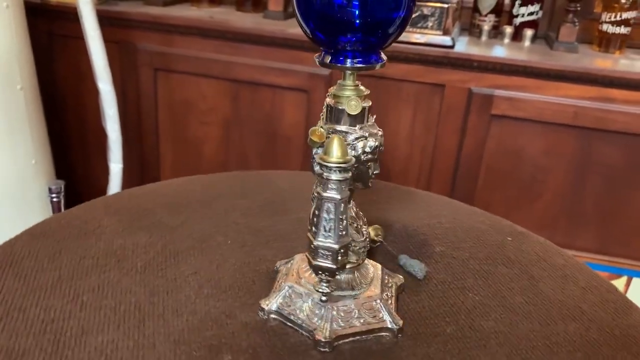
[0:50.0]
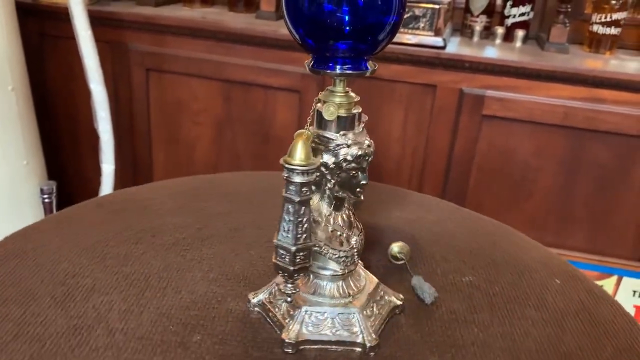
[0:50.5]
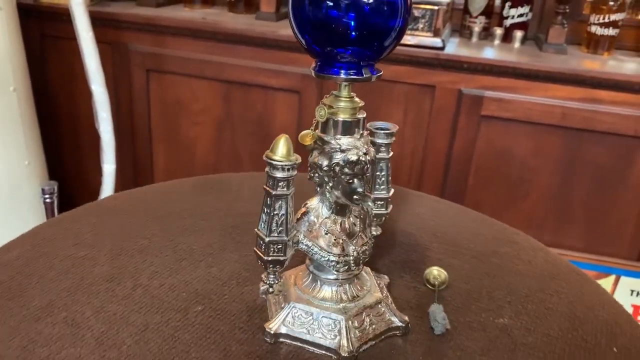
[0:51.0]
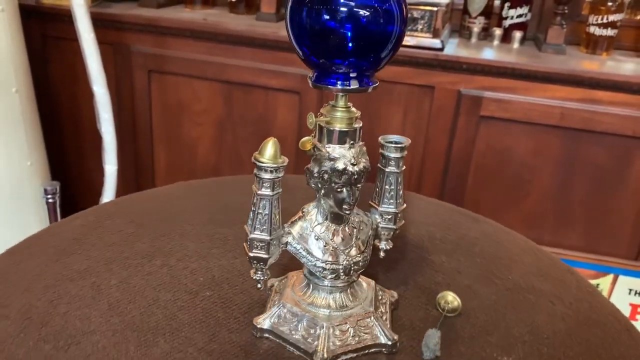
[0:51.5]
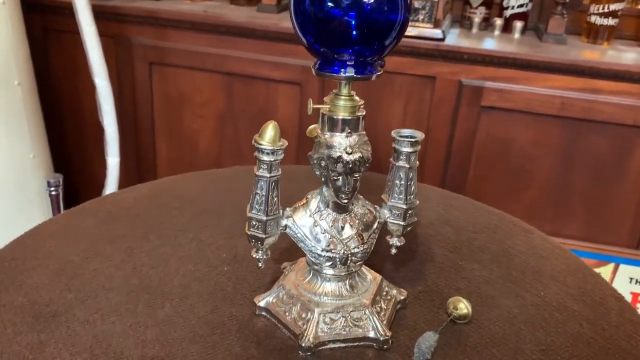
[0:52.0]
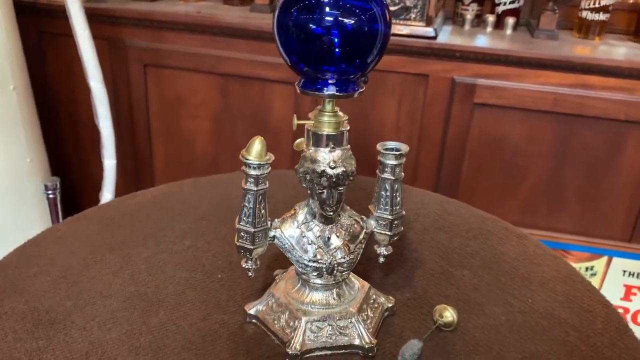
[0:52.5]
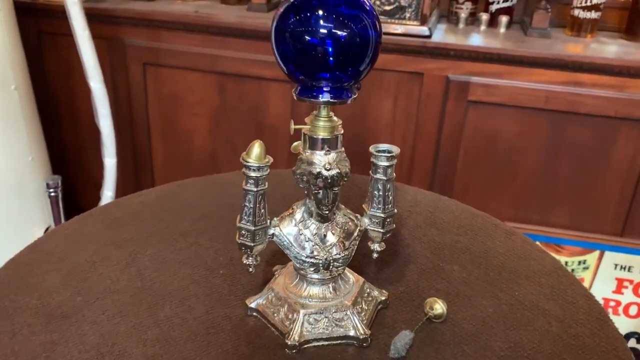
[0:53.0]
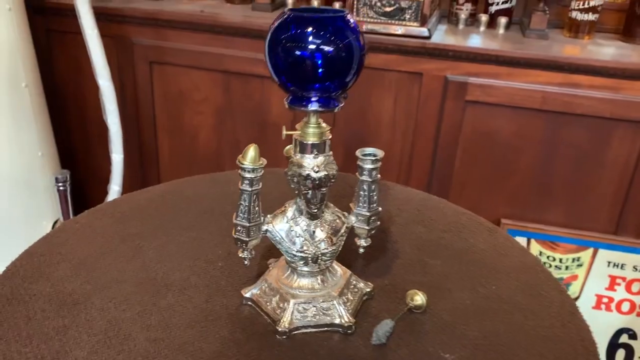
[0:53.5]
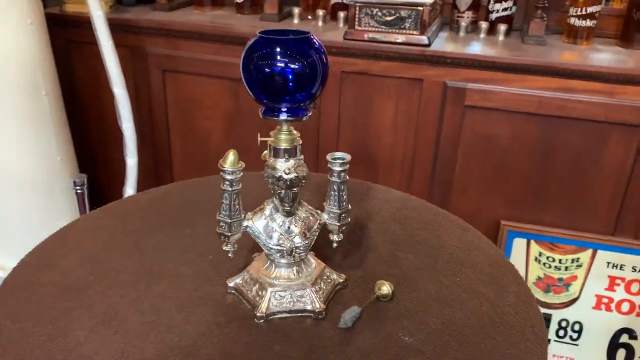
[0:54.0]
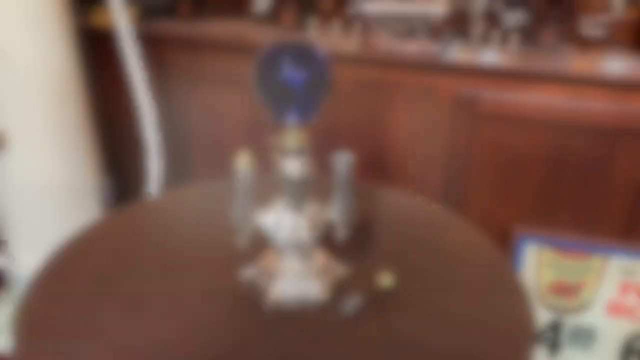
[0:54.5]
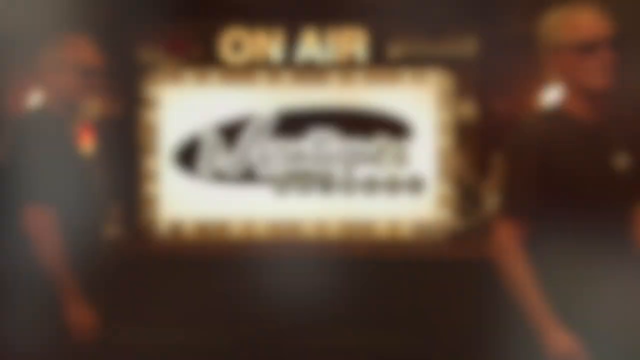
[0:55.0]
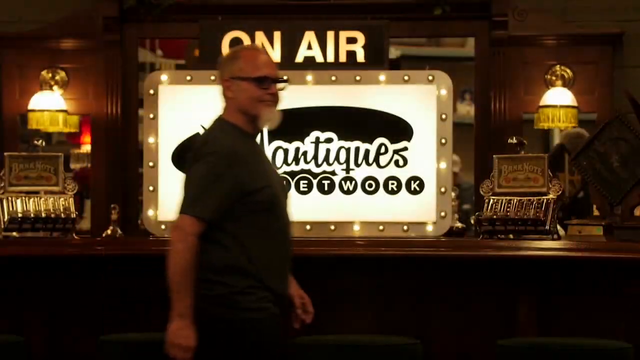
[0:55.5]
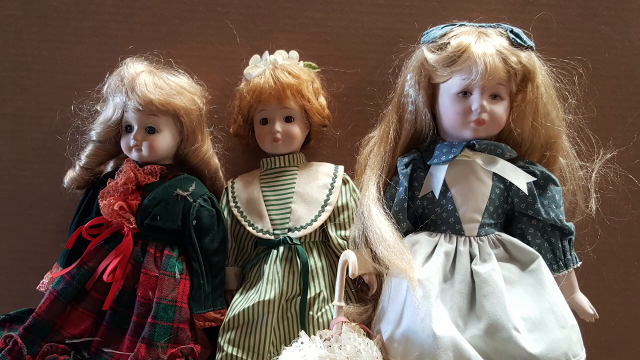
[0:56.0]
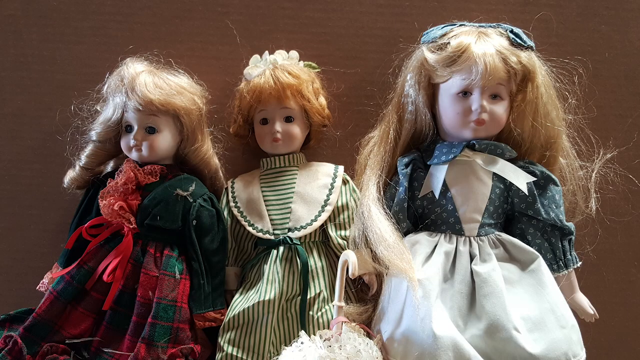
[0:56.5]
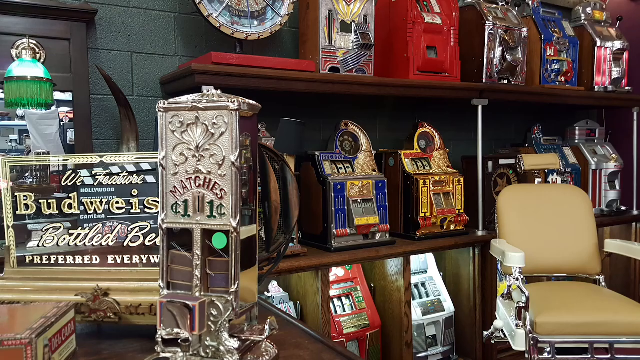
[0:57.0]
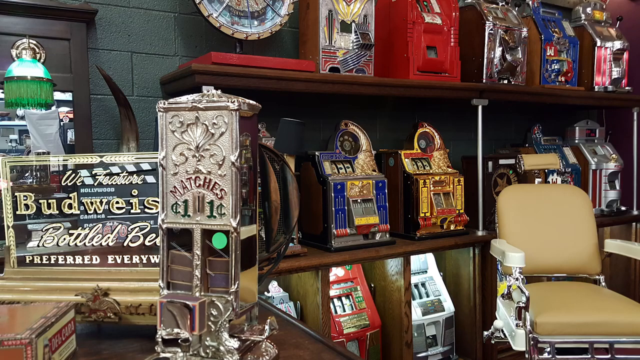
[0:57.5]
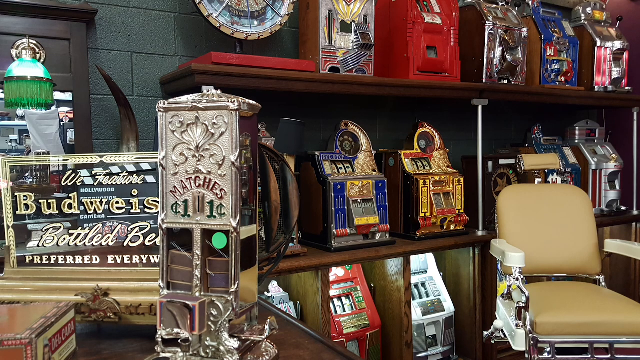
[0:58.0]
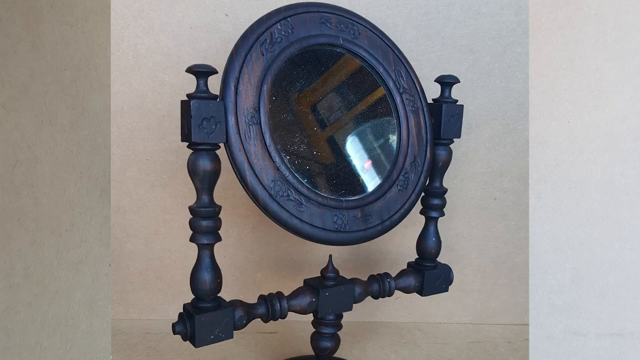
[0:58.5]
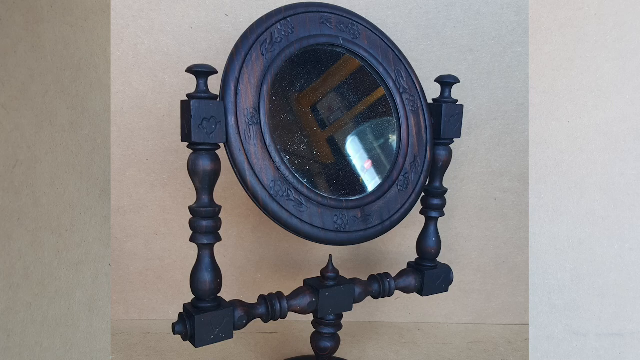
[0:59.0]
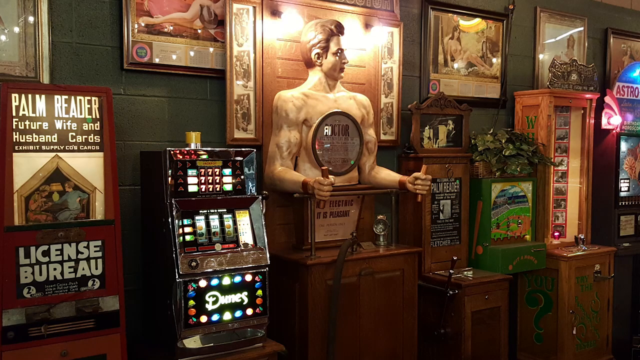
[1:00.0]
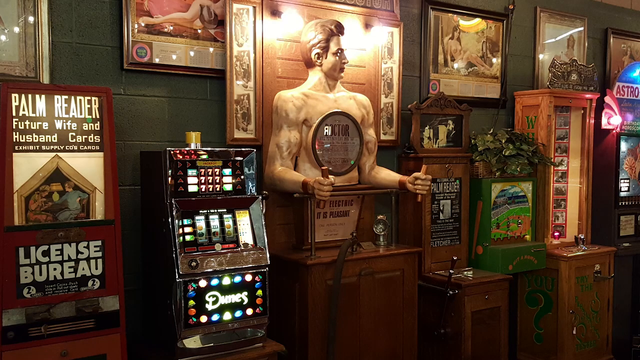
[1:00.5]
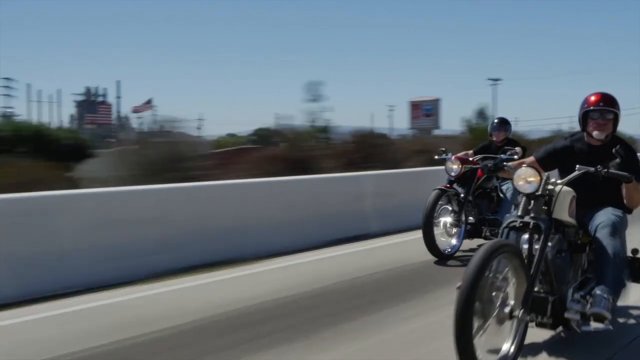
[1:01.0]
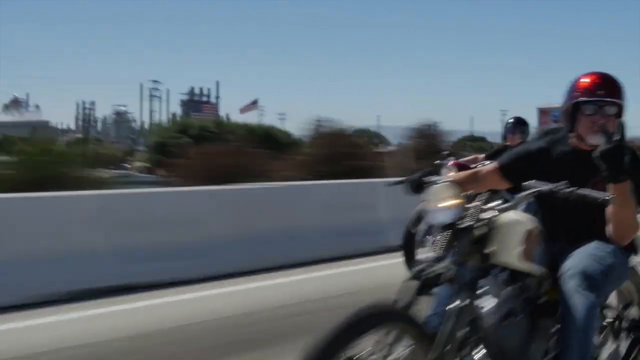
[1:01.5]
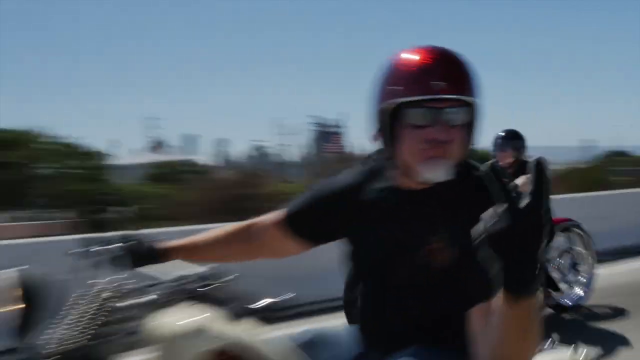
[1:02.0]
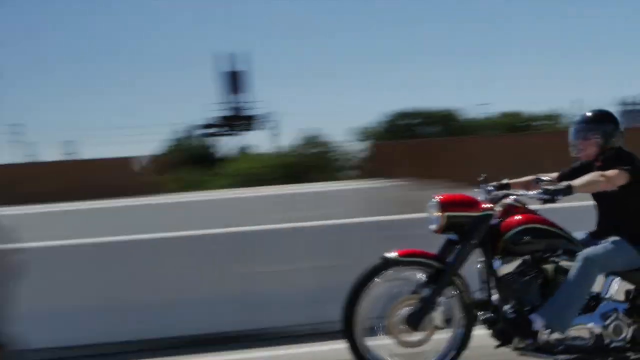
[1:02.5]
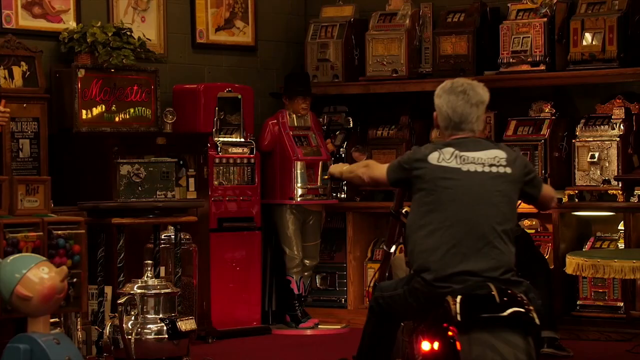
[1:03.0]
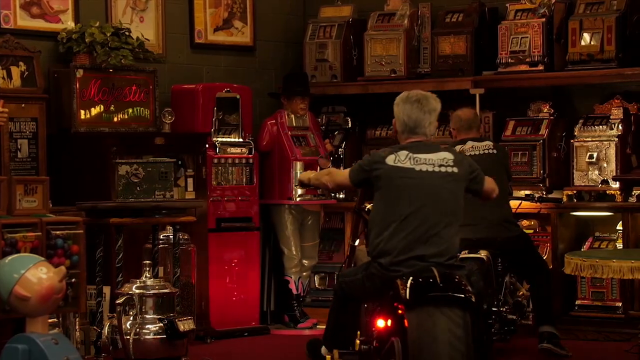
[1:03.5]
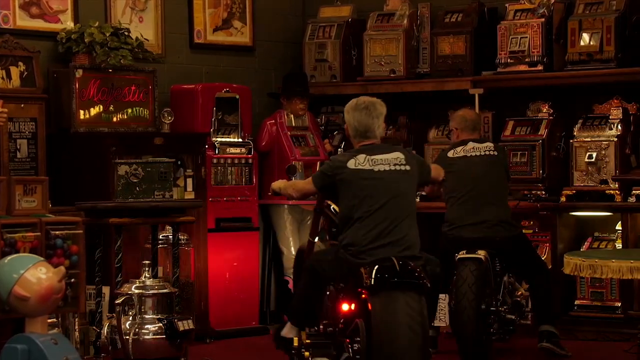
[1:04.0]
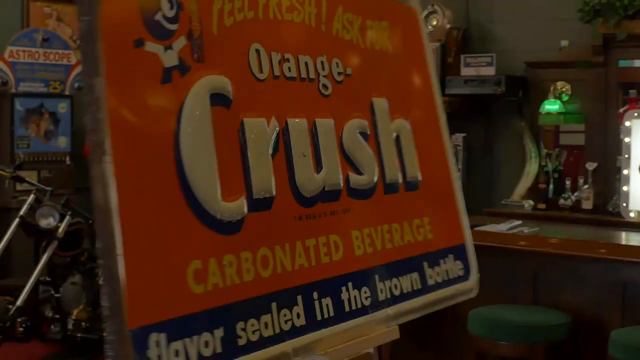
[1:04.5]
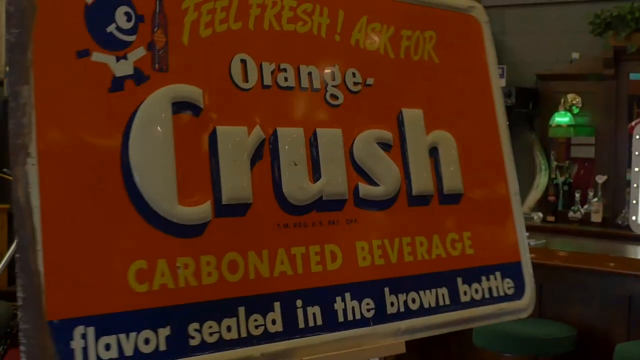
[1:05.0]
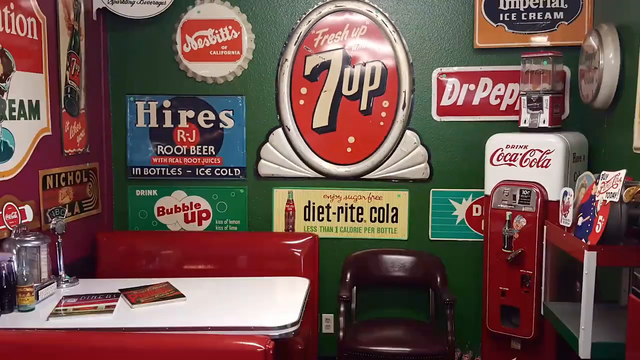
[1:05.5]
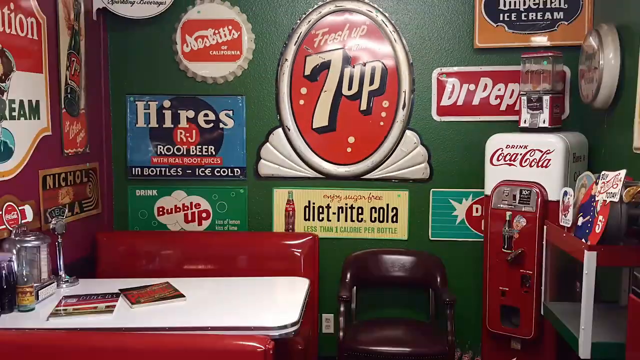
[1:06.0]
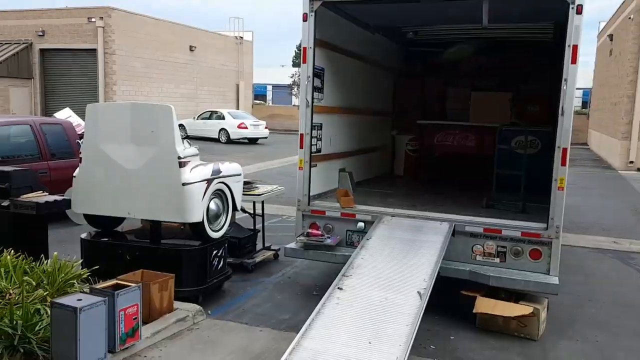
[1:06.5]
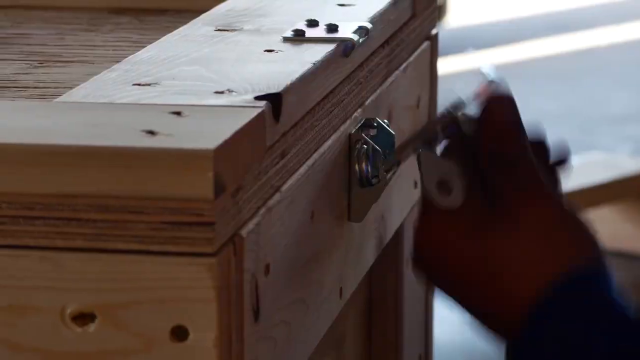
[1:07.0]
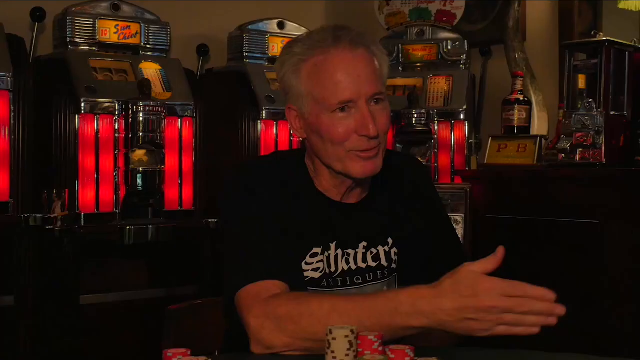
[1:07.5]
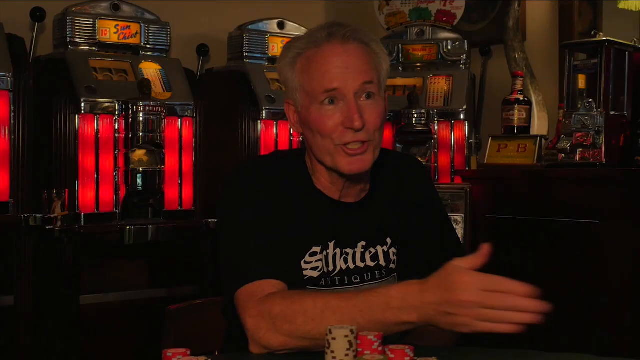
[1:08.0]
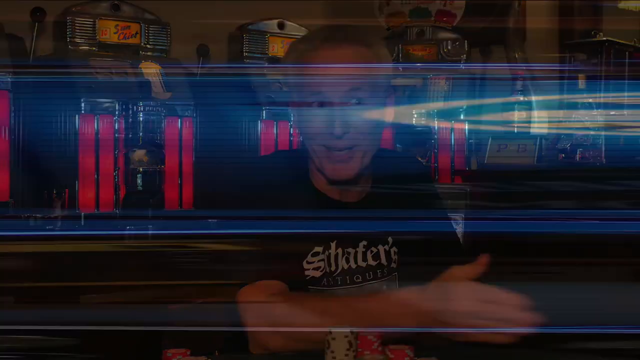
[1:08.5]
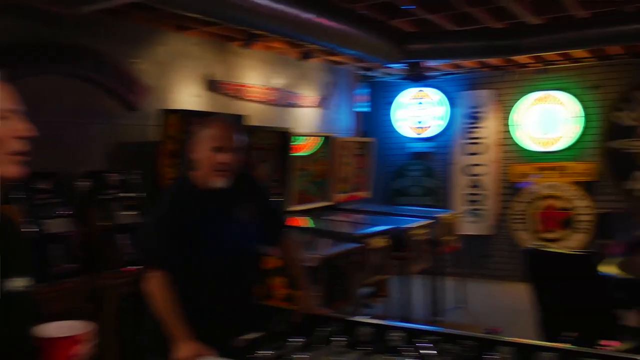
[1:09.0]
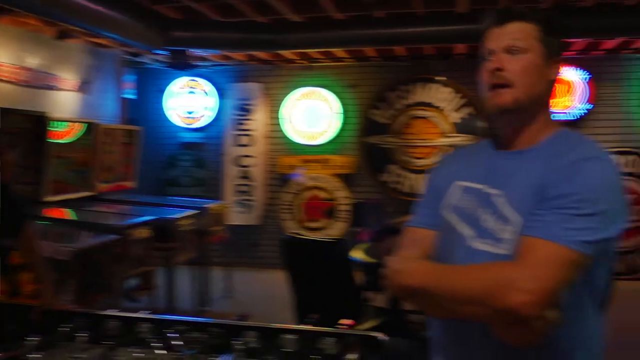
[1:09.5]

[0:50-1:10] The setting appears to be some sort of antique shop. The hookah-like item spins on the brown round table, and then the video moves to what appear to be vintage dolls. Old 7-Up signs, old Budweiser signs and old Orange Crush signs are visible, along with all kinds of signage and miscellaneous, very clearly vintage items in the background. One shot shows something called "Mantiques", possibly the shop's name. There is also a shot of men on motorcycles, and people are seen talking in the background.